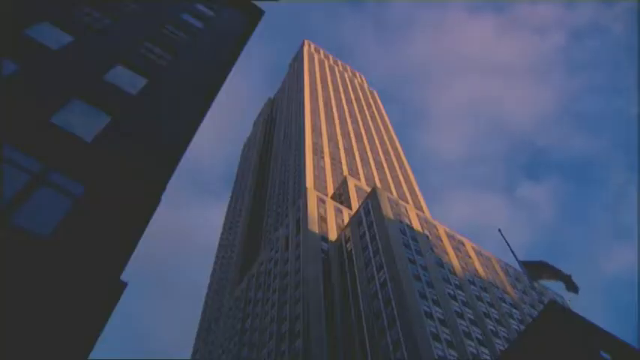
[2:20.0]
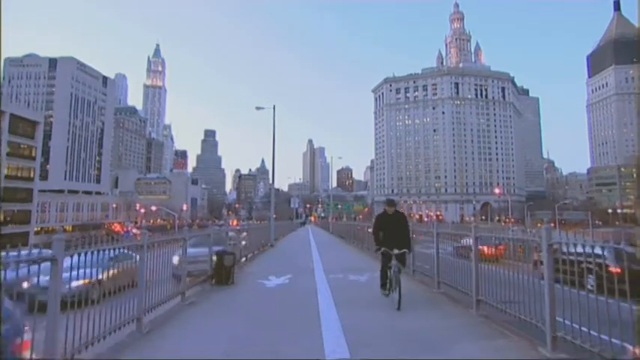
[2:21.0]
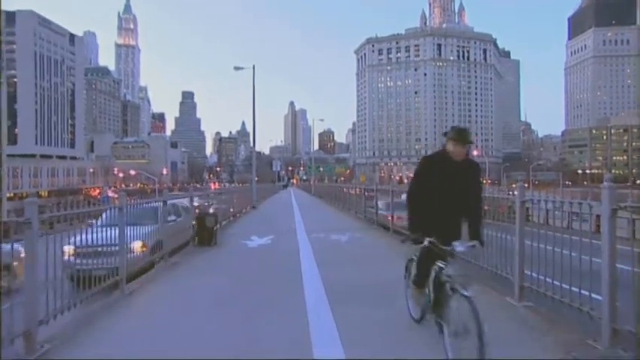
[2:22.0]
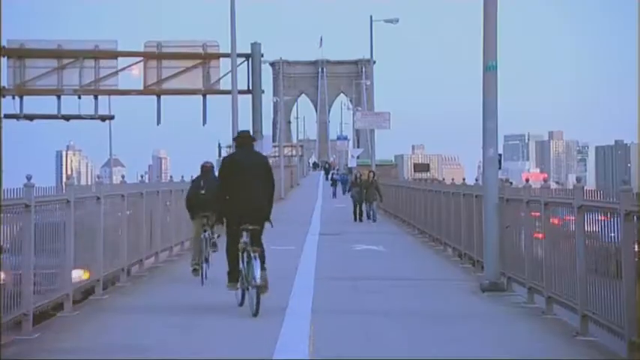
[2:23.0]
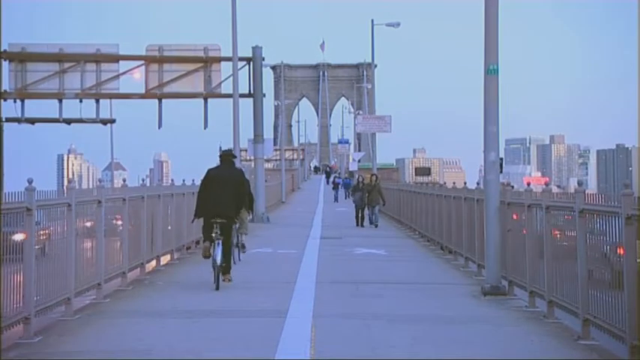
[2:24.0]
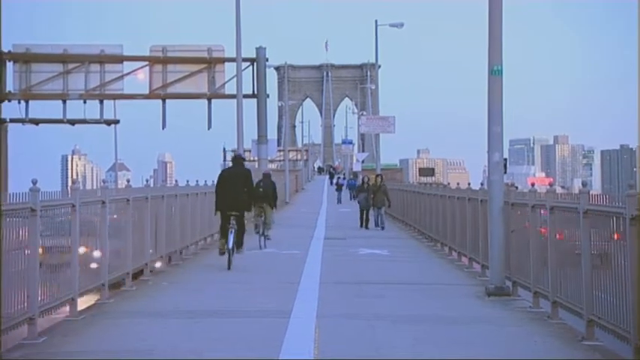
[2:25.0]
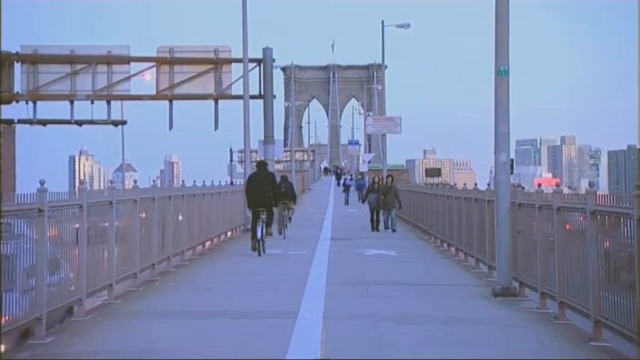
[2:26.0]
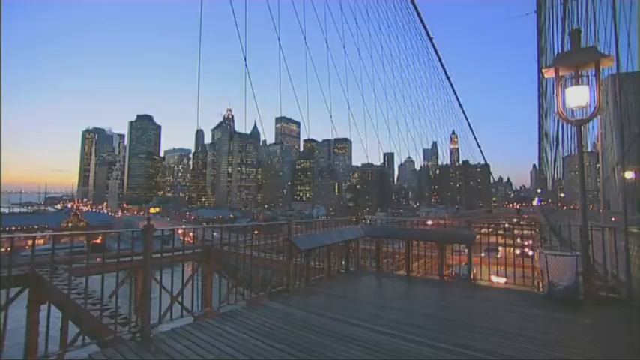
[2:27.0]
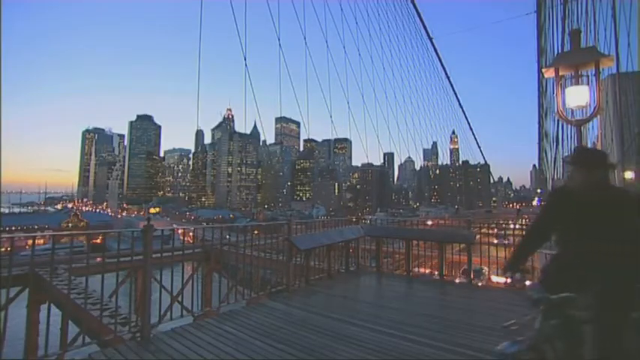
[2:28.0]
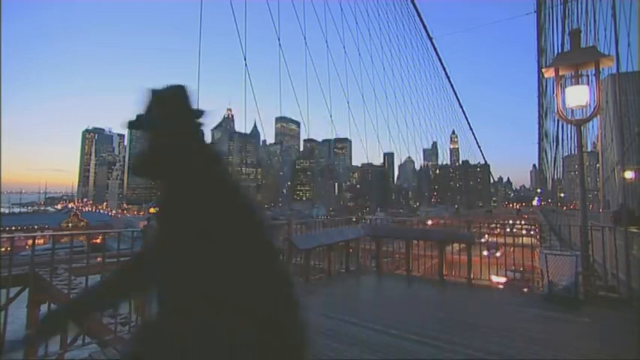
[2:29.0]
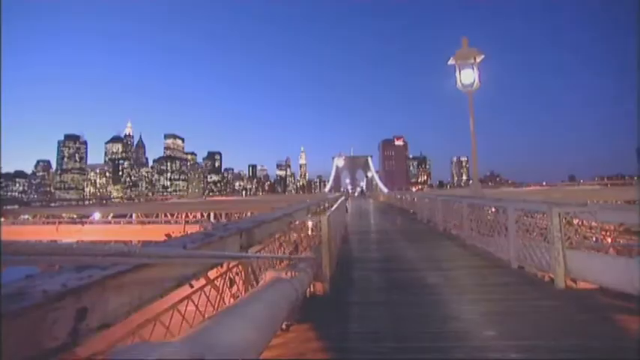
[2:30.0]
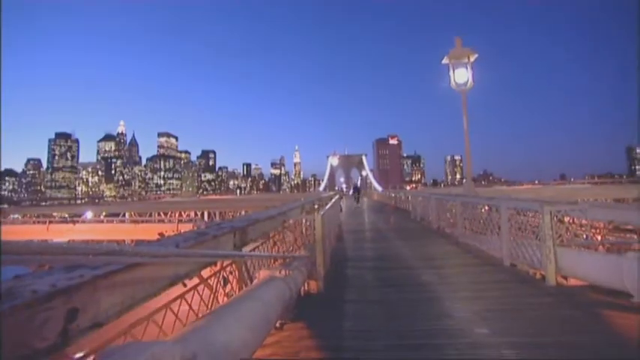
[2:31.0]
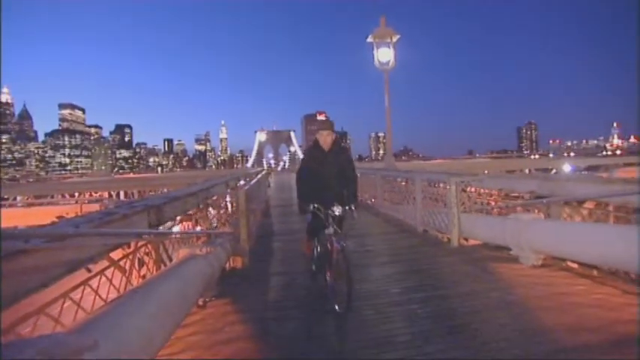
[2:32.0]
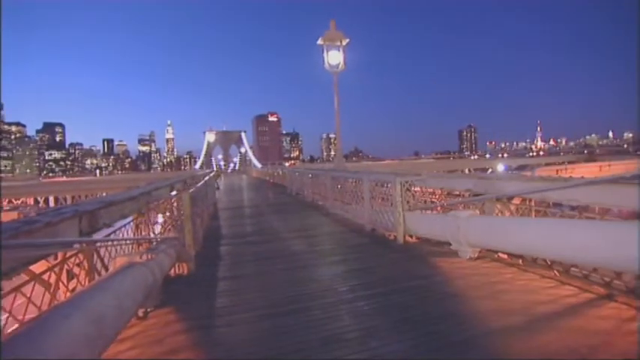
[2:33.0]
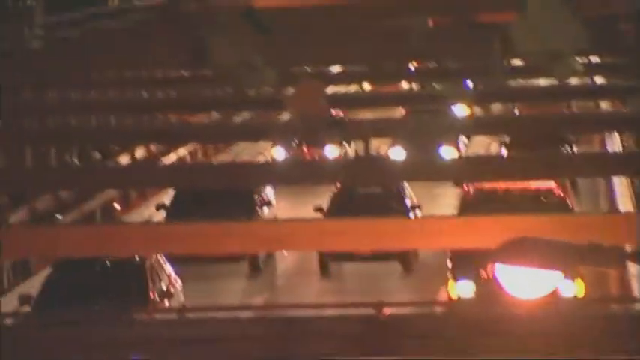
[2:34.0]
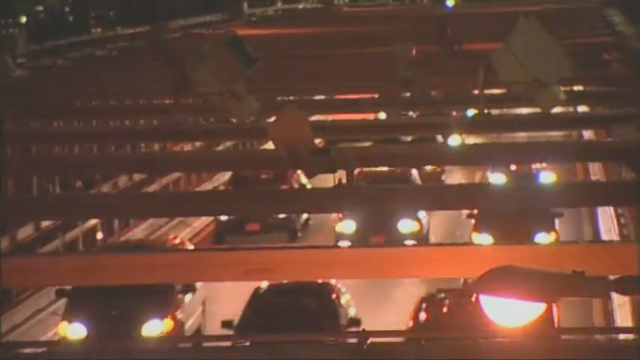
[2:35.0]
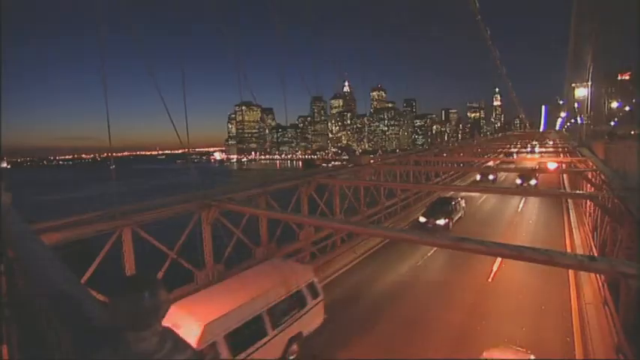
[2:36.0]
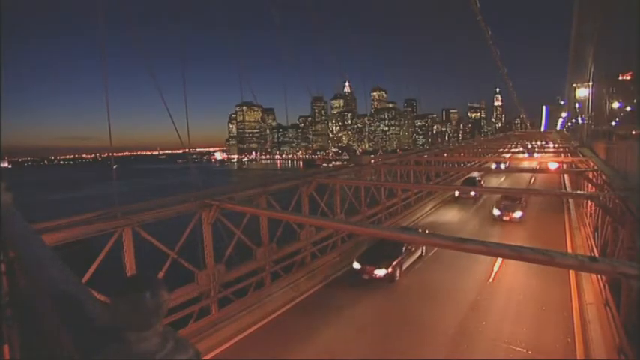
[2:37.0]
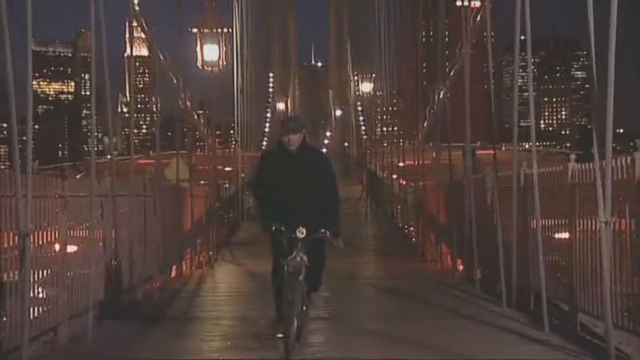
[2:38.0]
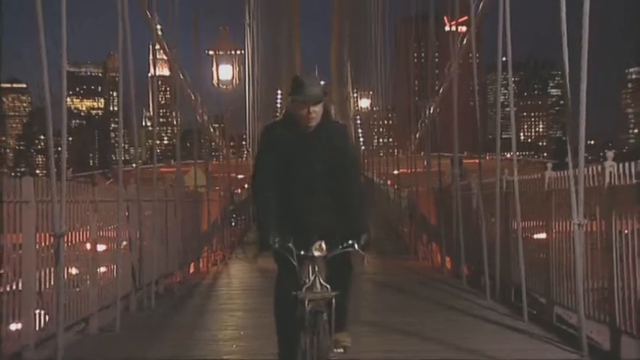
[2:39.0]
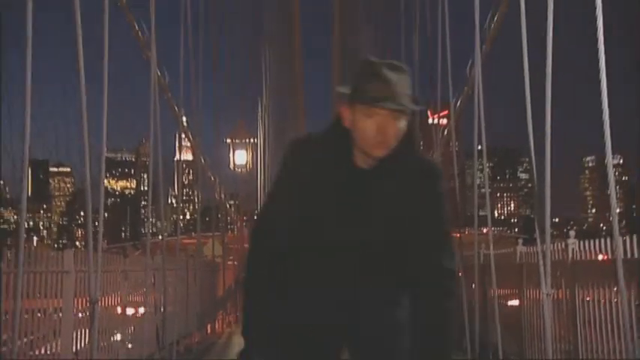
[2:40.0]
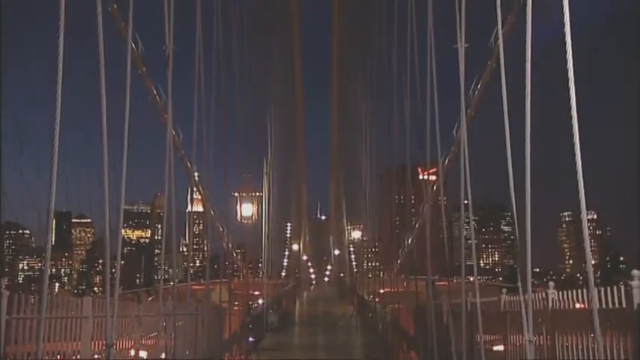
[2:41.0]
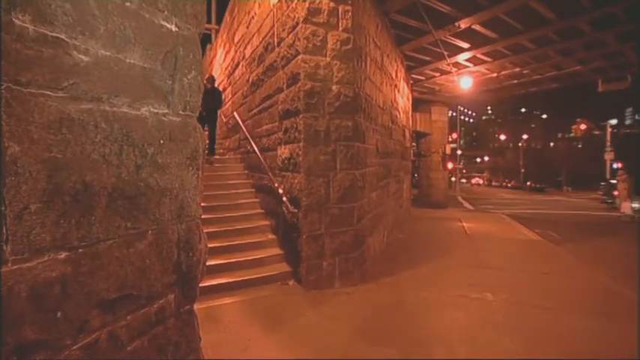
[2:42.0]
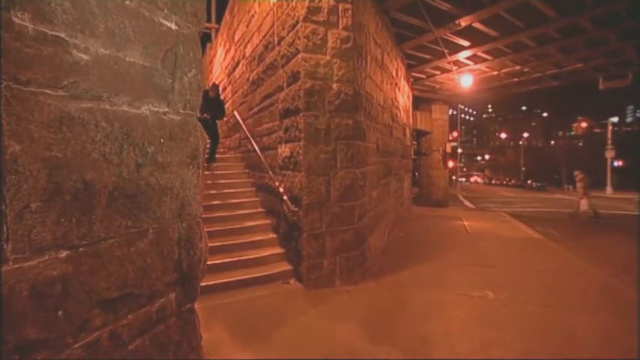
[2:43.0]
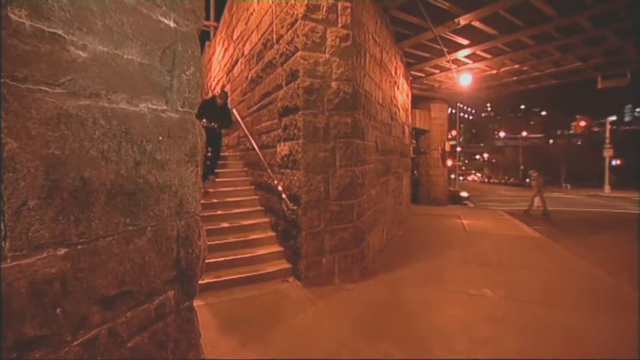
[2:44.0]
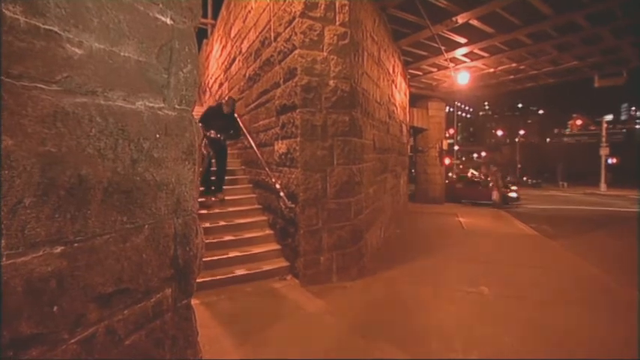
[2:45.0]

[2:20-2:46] The man rides the bike on a bike trail and crosses a river on a bridge, where others on bikes are doing the same. It has gotten dark and is nighttime. Below him, traffic with its lights on pours over the bridge. On the other side of the river he carries the bike down to the street. He wears black pants, a dark coat, a dark hat and gloves, and the bike is green. He rides on until he reaches a well-lit street.